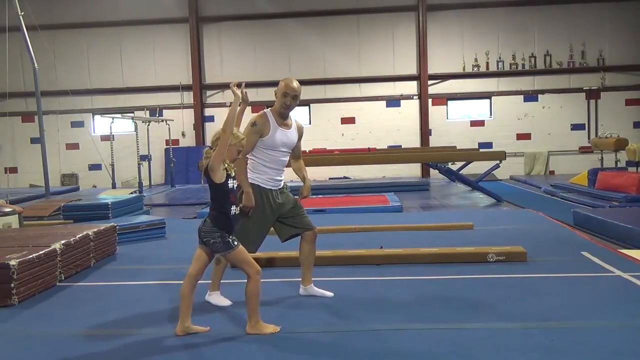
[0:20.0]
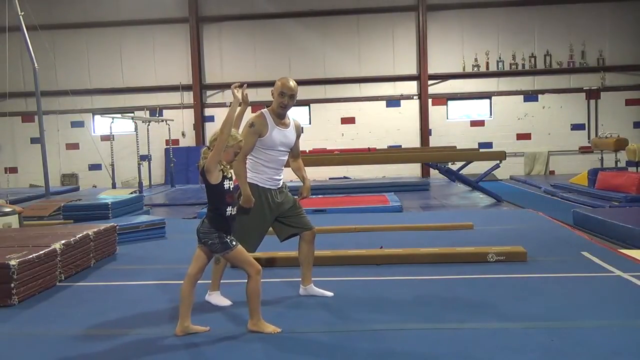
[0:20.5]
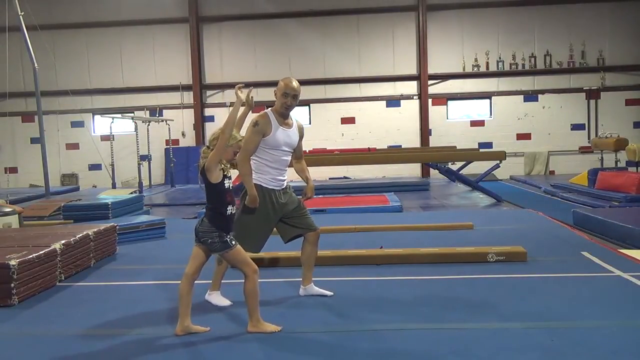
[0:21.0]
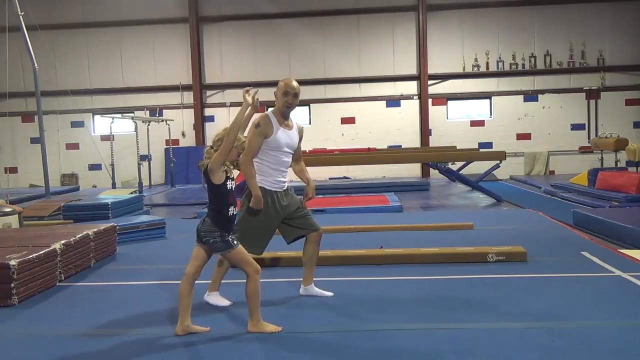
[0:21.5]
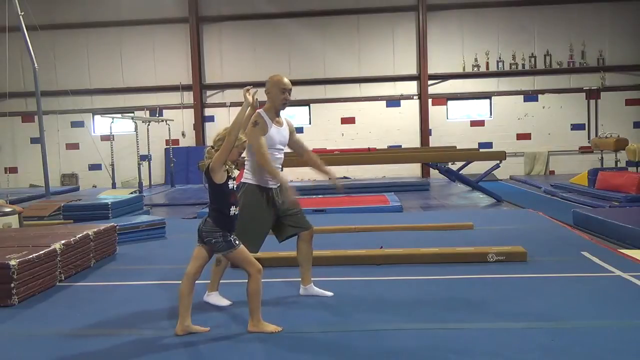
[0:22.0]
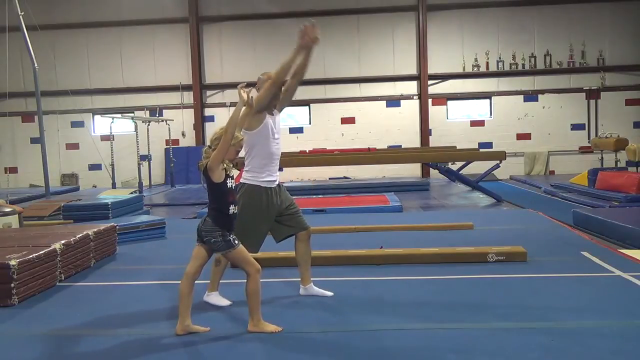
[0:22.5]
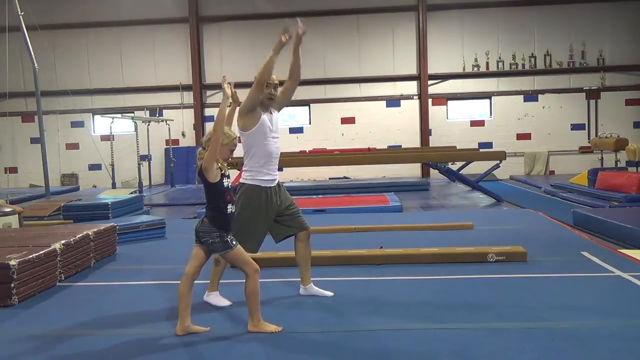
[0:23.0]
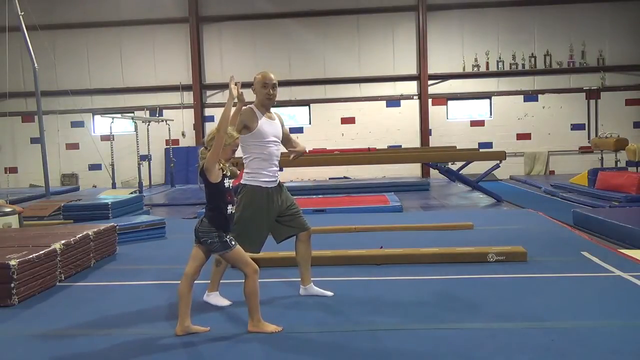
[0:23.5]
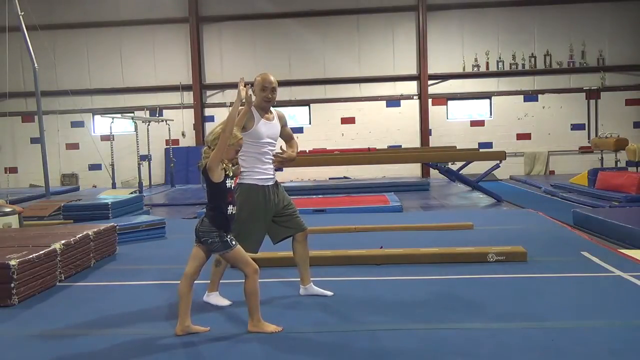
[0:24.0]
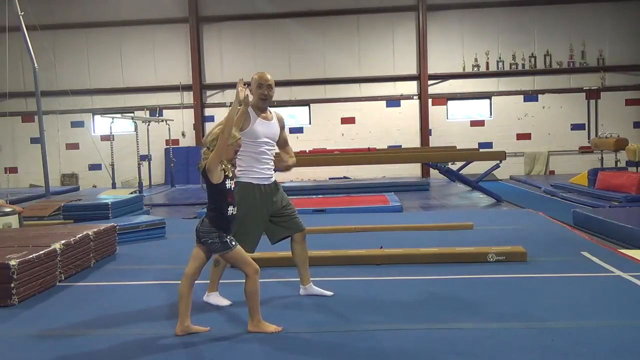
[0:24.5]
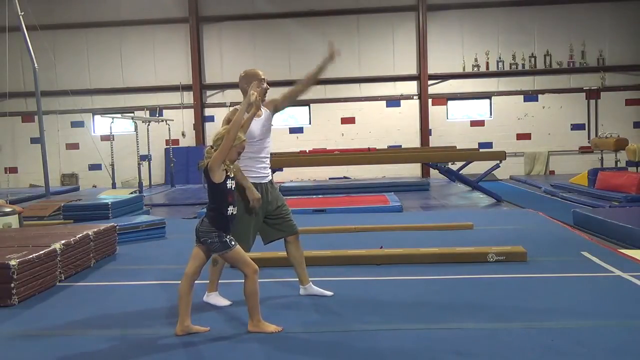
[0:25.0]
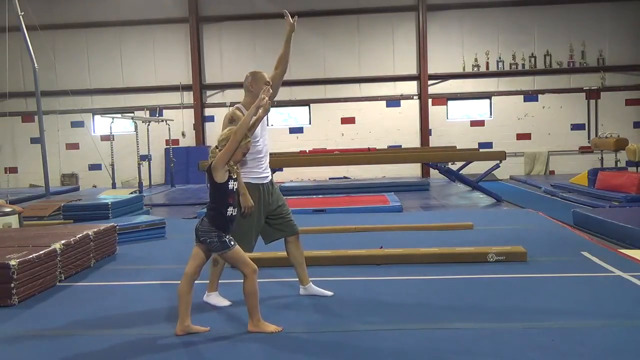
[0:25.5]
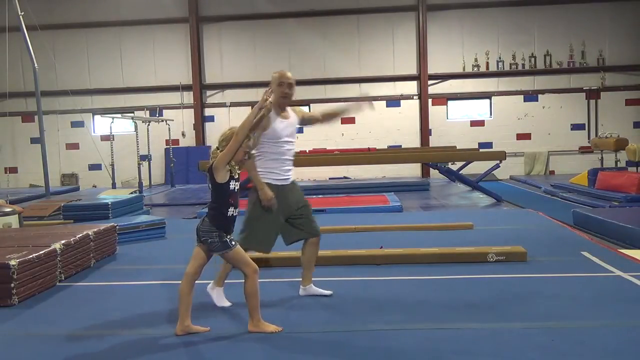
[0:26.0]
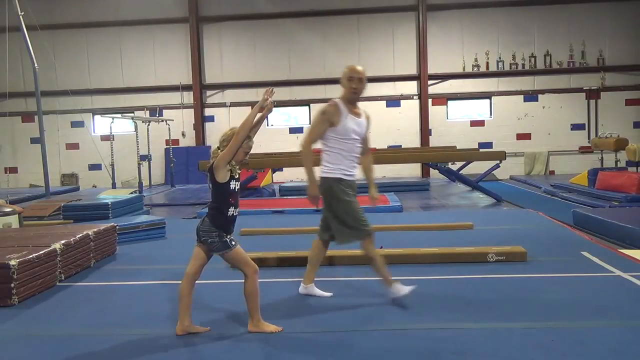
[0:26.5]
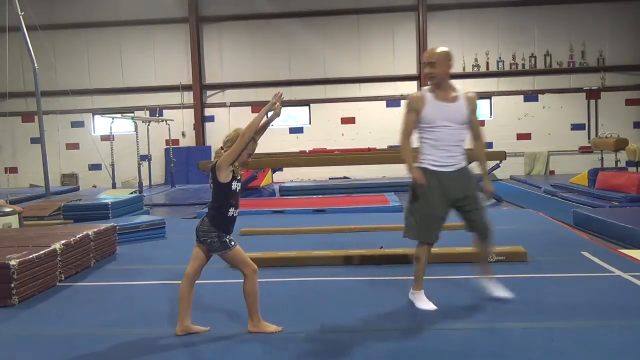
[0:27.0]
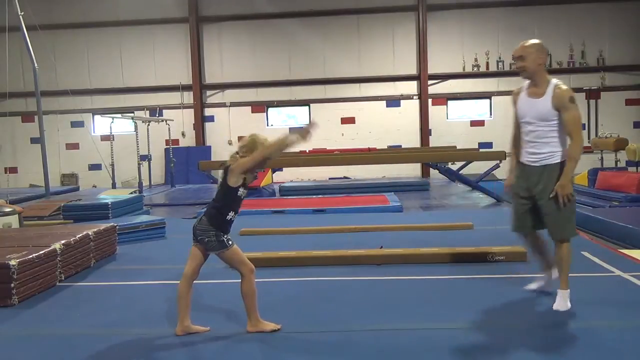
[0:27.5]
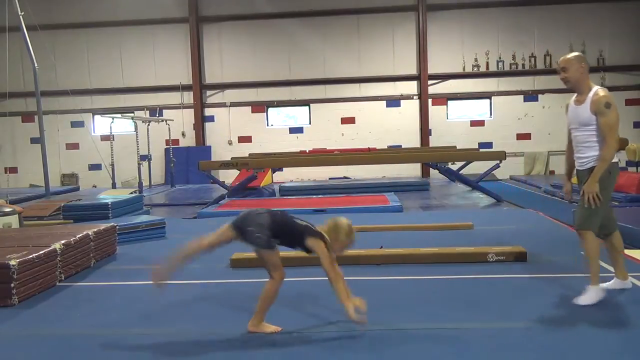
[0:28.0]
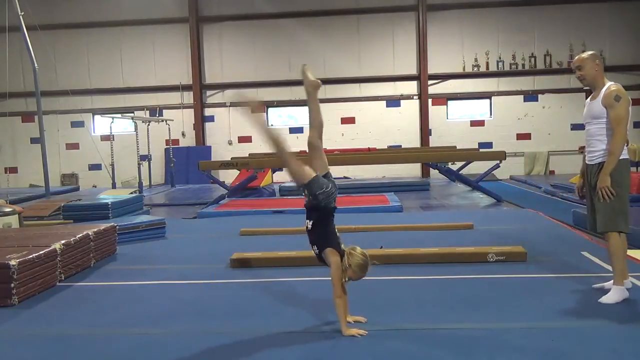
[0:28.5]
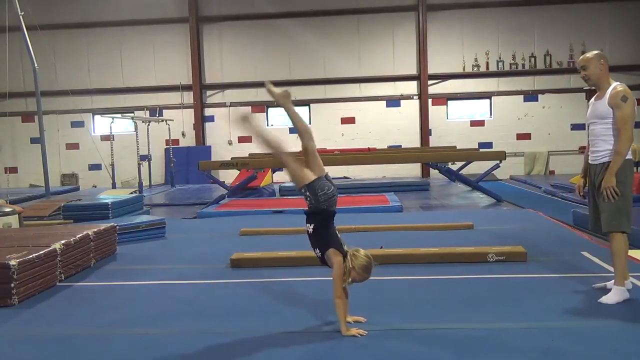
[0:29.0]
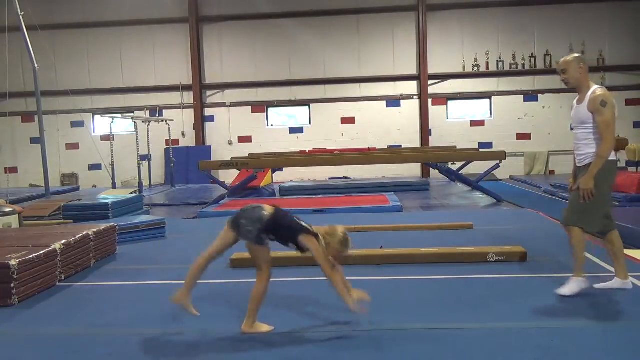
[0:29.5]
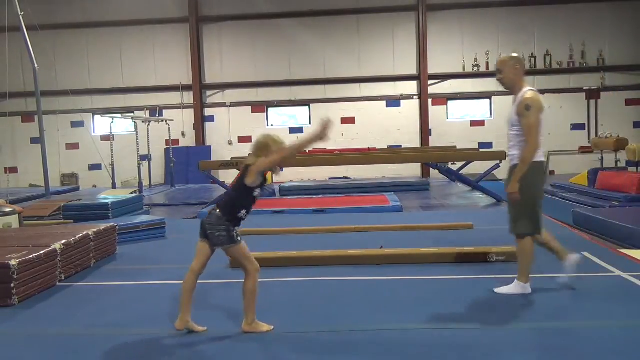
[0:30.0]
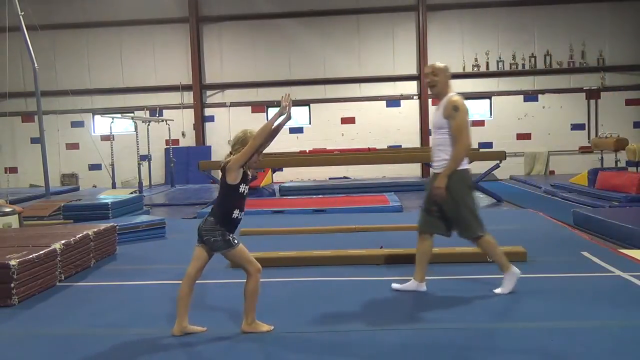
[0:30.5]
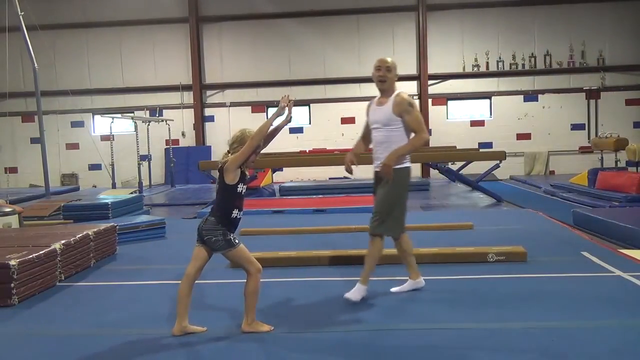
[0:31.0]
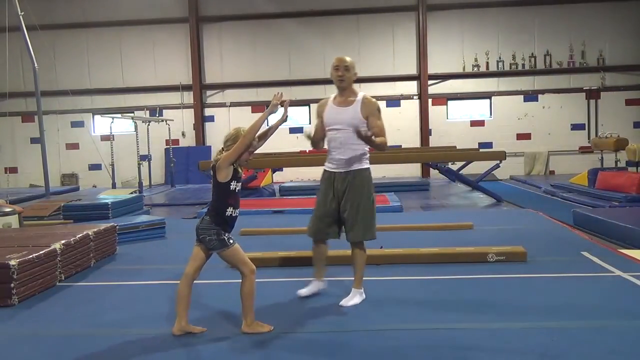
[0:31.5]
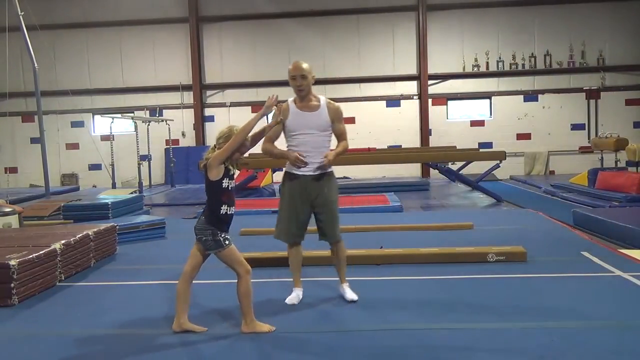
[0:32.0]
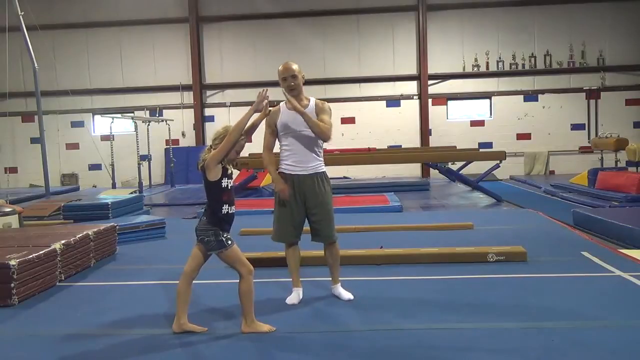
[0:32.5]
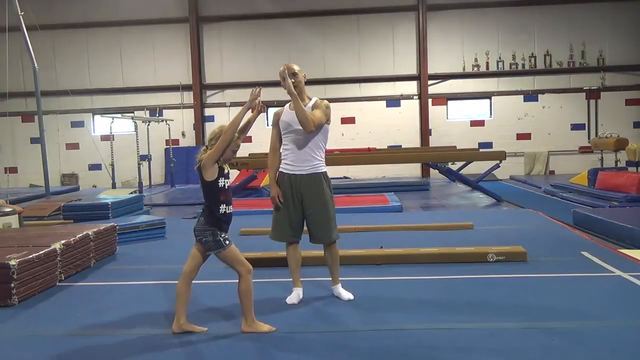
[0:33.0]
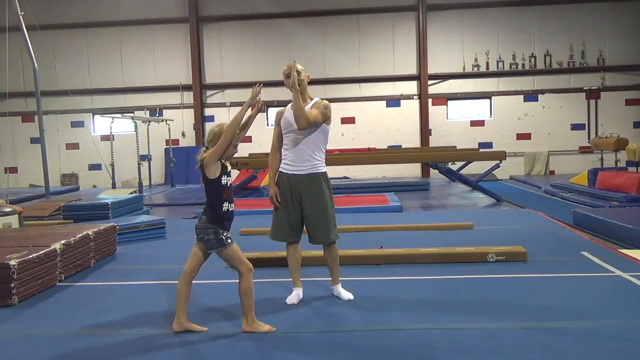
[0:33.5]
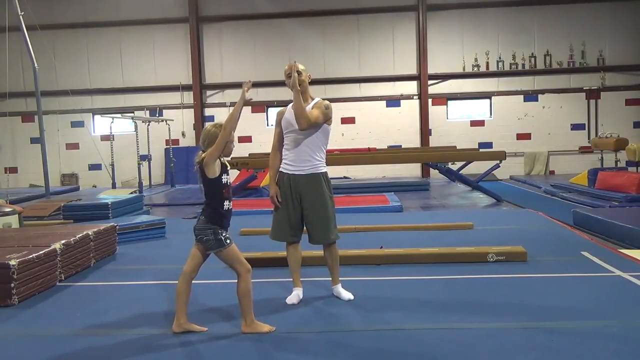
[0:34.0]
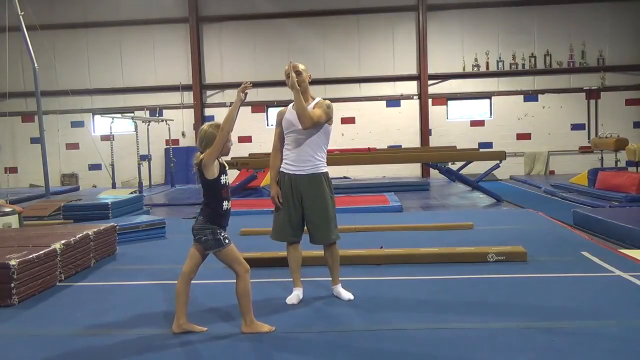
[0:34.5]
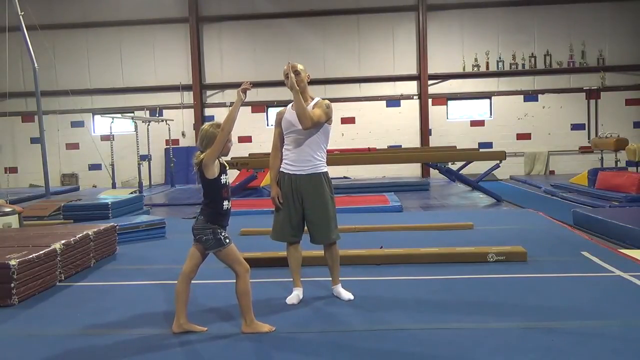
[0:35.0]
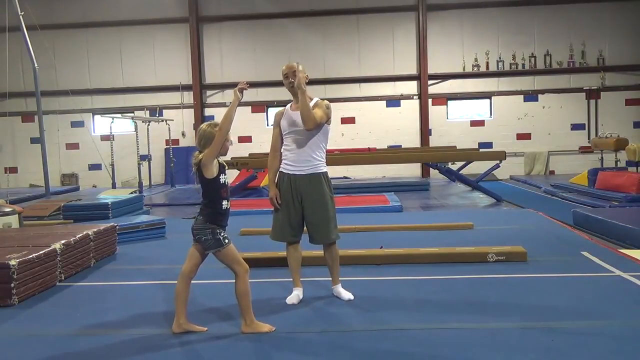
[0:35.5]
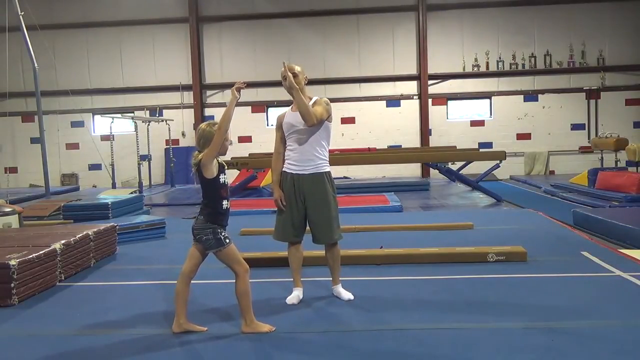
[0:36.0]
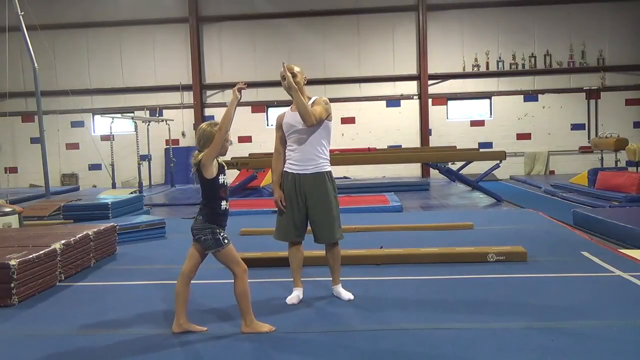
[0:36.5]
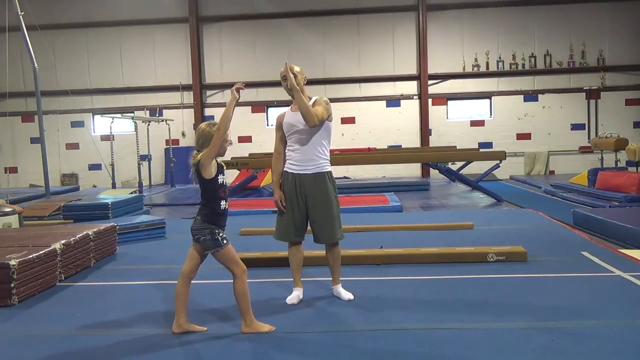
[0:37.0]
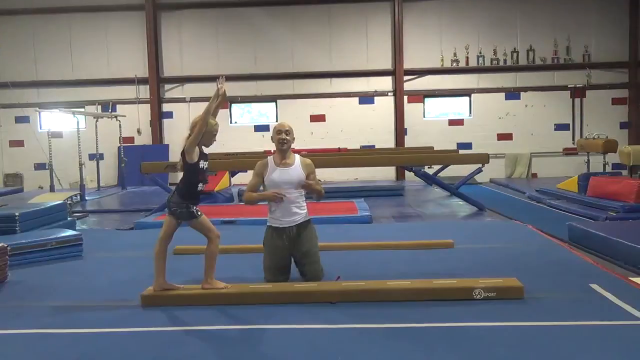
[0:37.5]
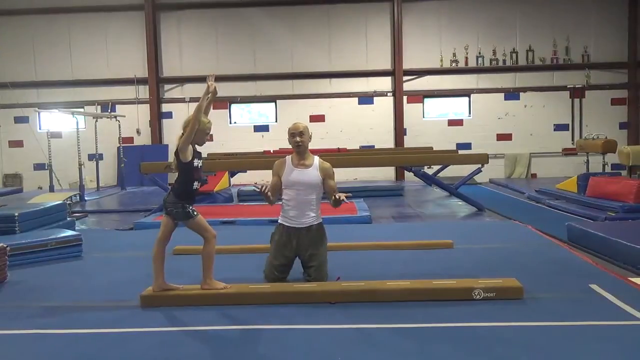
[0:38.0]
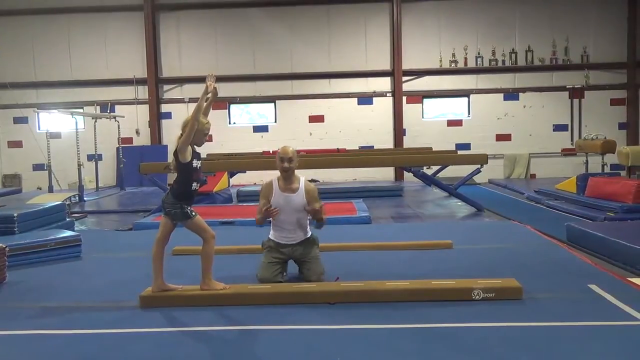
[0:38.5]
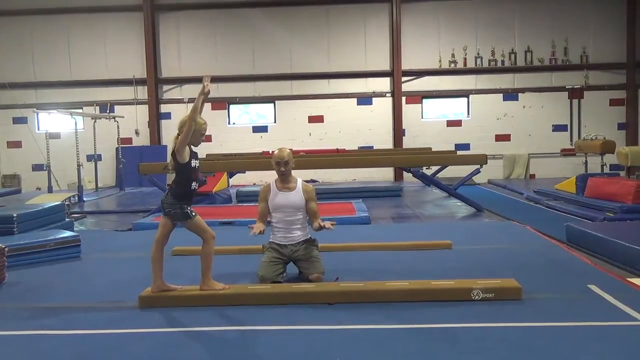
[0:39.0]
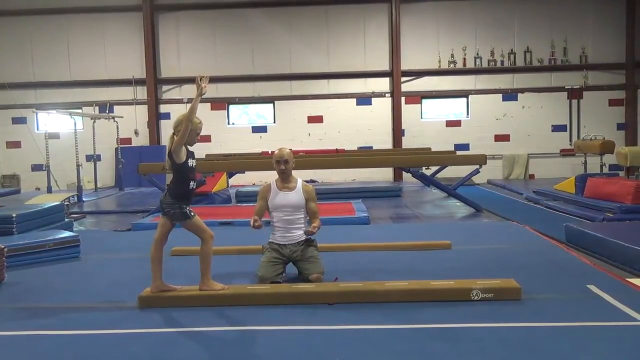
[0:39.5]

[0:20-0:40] The scene is in another room with another man doing flips. Many blue mats are on the ground, and in the background blue windows let sunlight into the building. In the top right section of the room, a number of trophies are aligned against the wall. The man and the little girl do gymnastics flips together, working in unison to help her practice the flips.